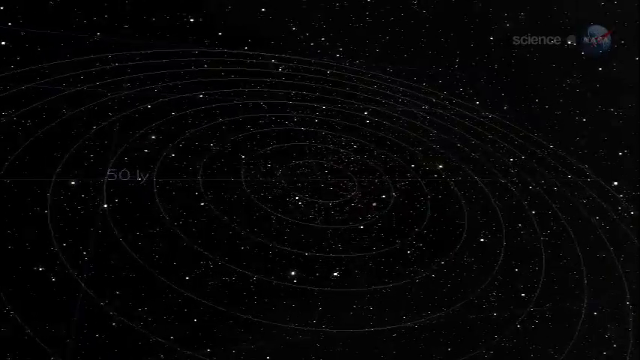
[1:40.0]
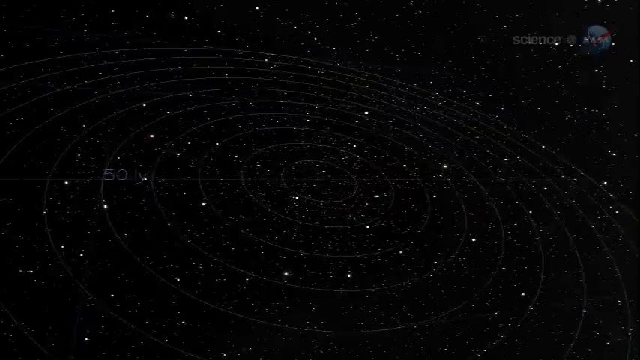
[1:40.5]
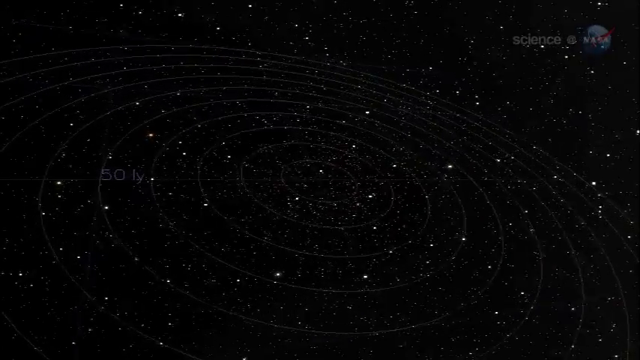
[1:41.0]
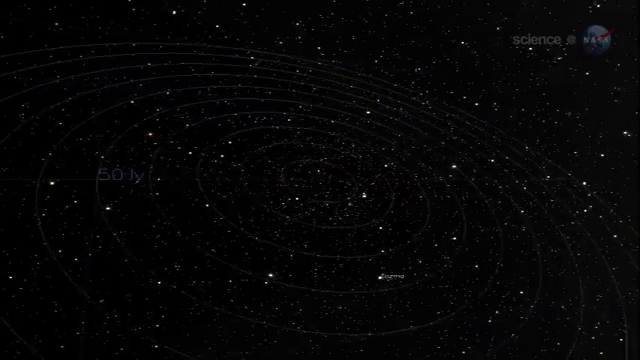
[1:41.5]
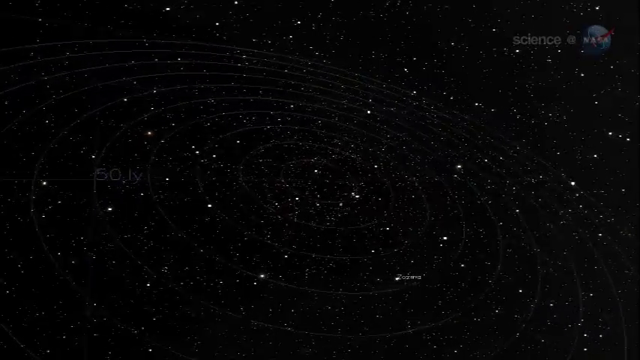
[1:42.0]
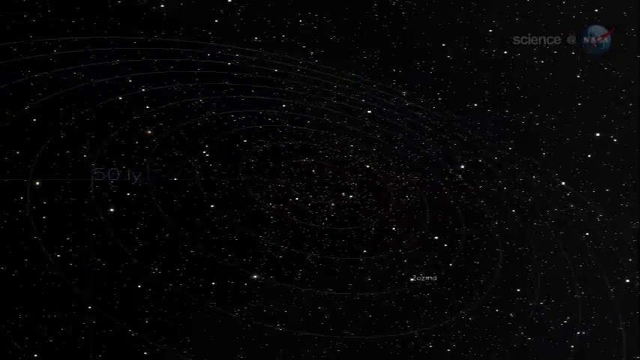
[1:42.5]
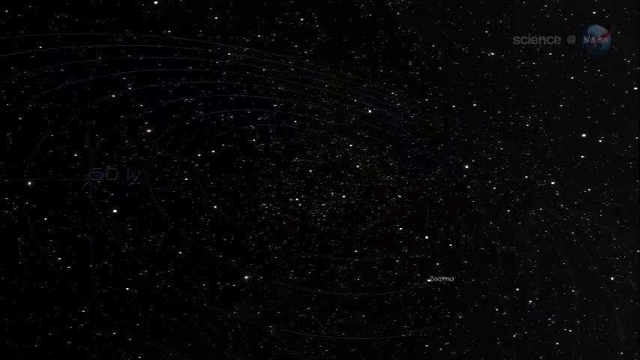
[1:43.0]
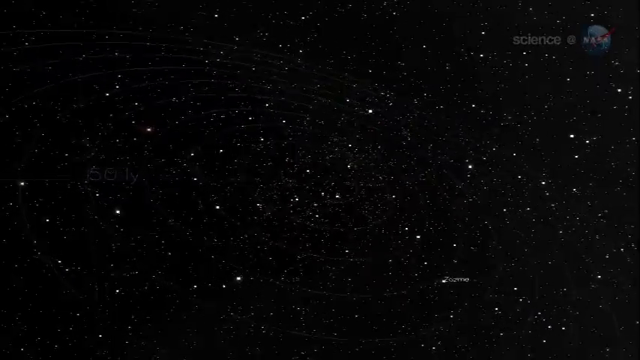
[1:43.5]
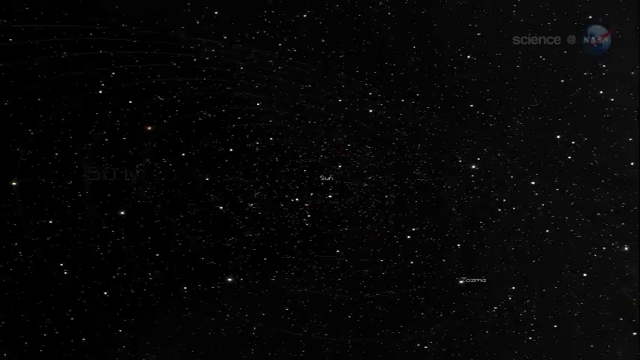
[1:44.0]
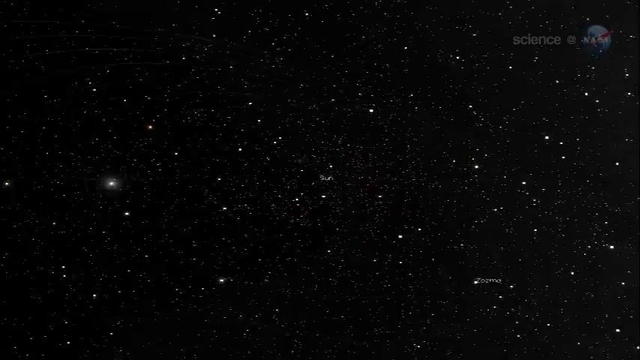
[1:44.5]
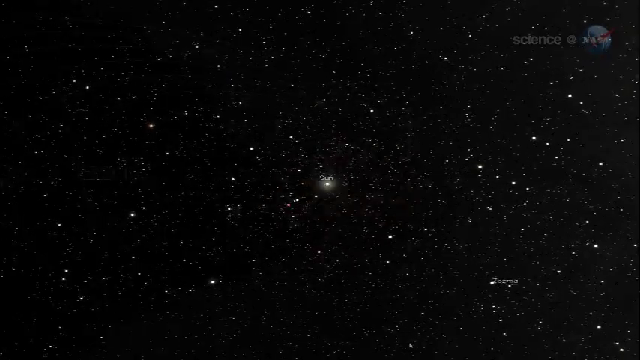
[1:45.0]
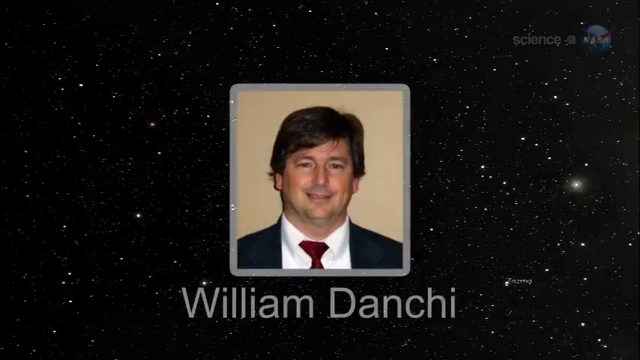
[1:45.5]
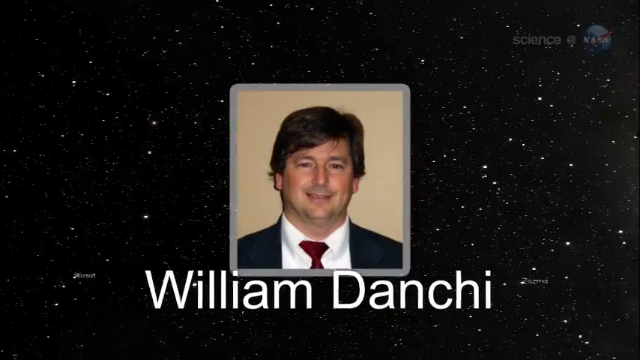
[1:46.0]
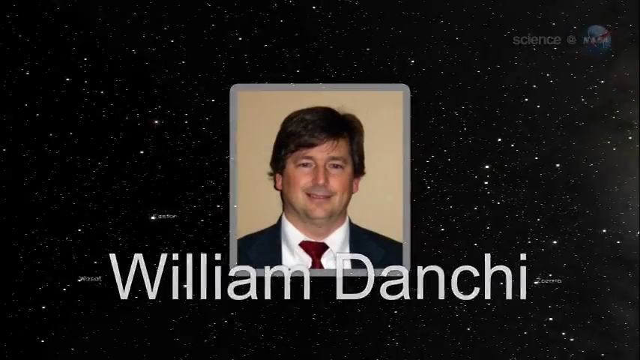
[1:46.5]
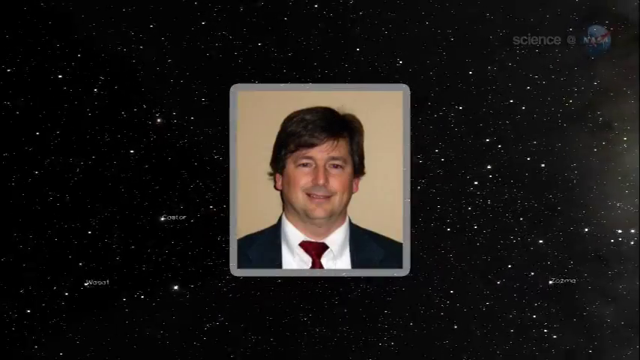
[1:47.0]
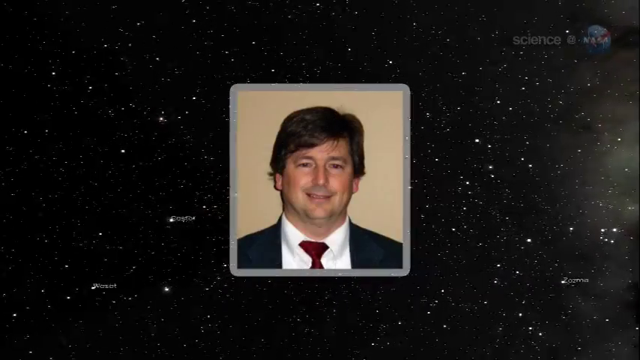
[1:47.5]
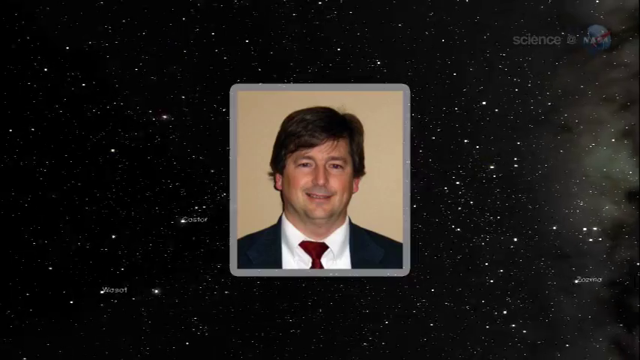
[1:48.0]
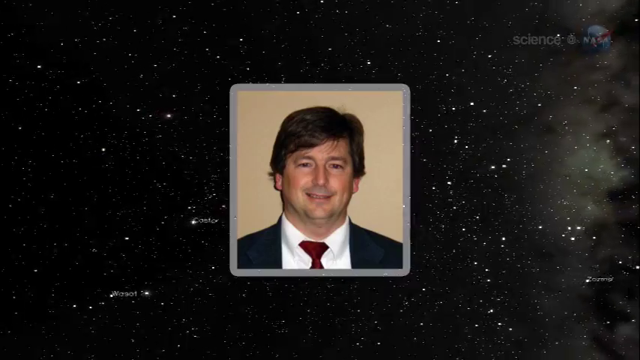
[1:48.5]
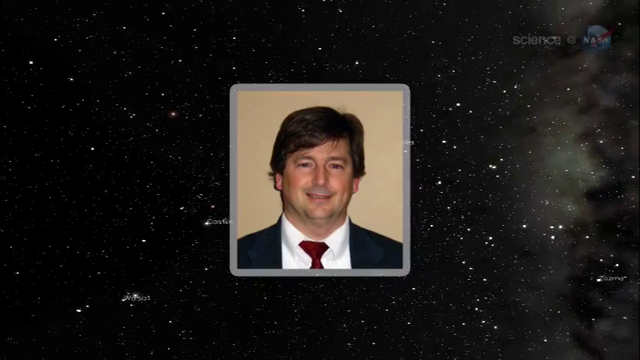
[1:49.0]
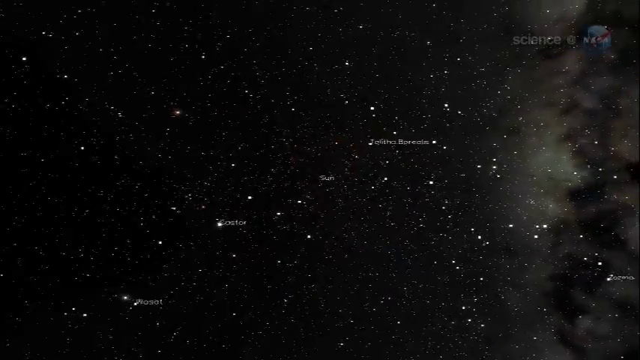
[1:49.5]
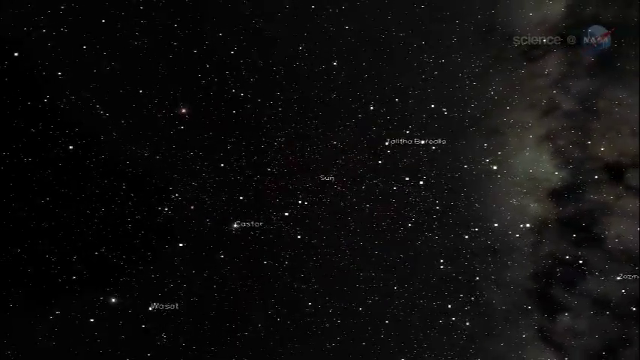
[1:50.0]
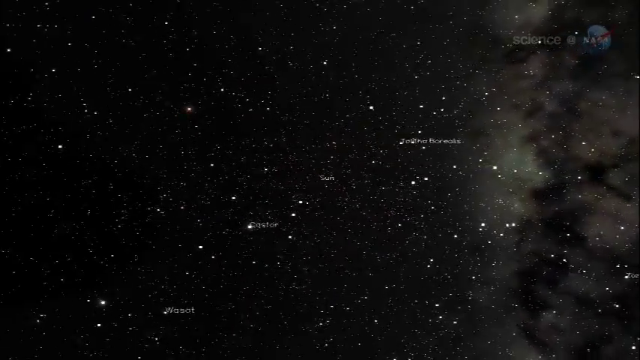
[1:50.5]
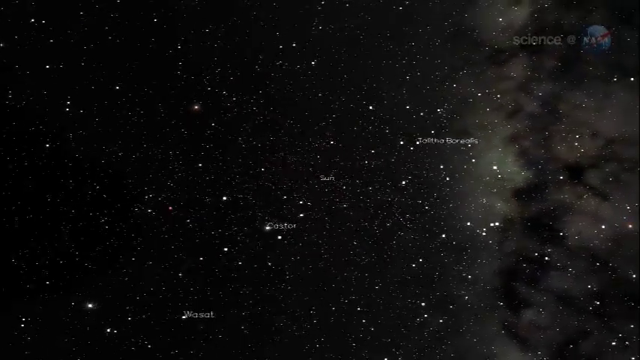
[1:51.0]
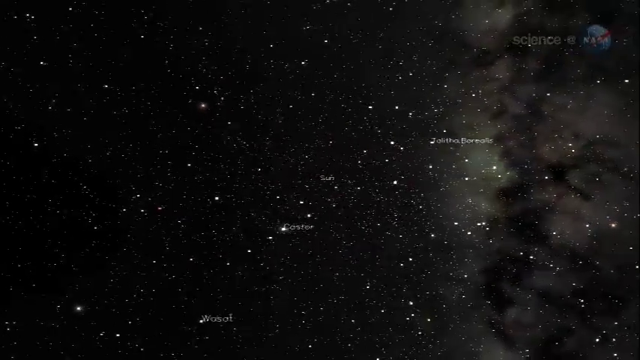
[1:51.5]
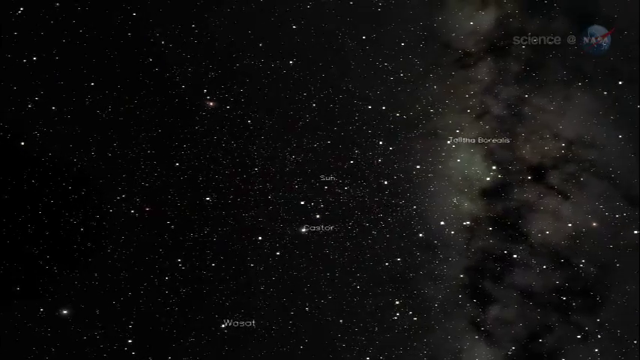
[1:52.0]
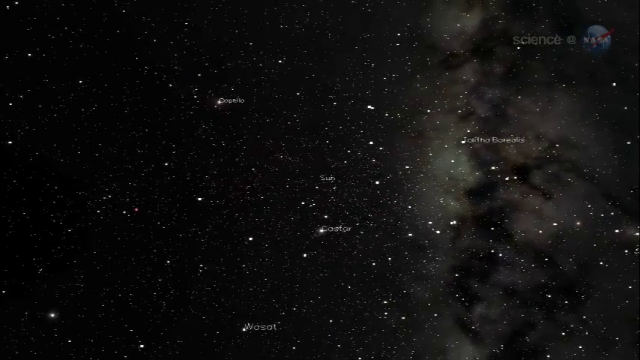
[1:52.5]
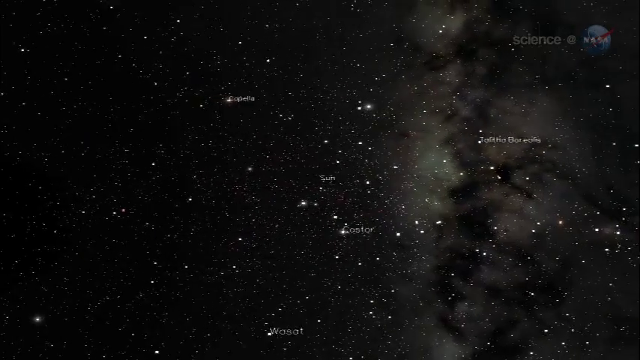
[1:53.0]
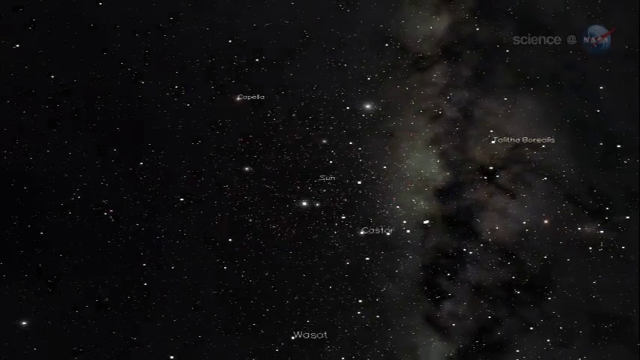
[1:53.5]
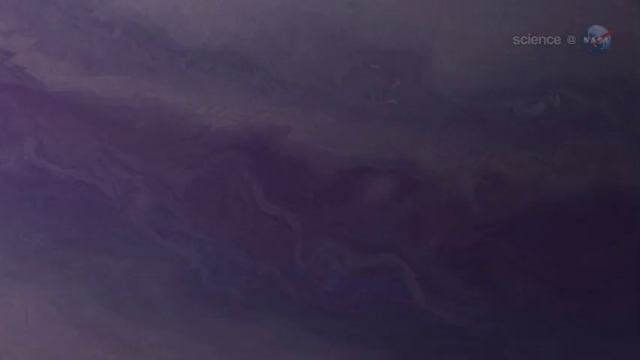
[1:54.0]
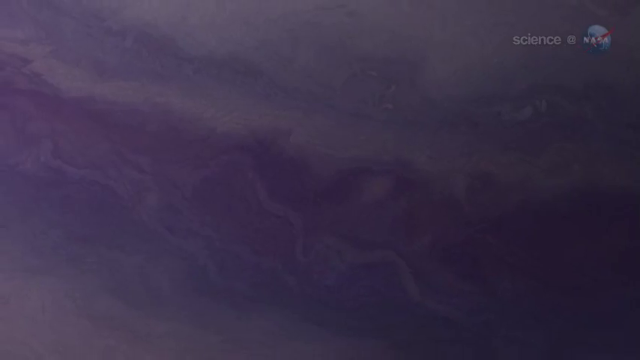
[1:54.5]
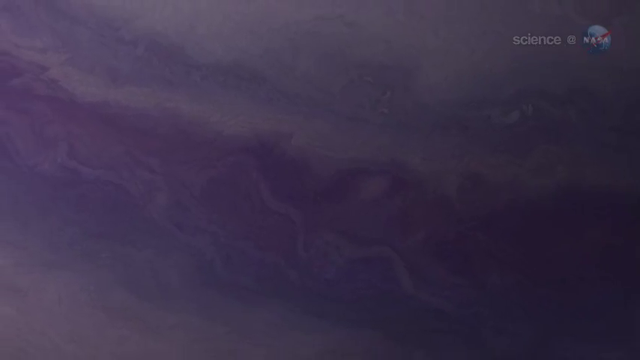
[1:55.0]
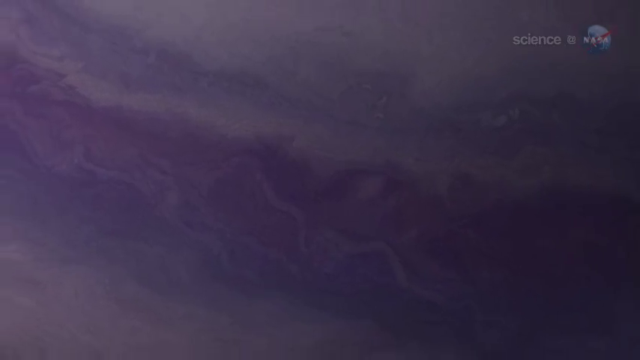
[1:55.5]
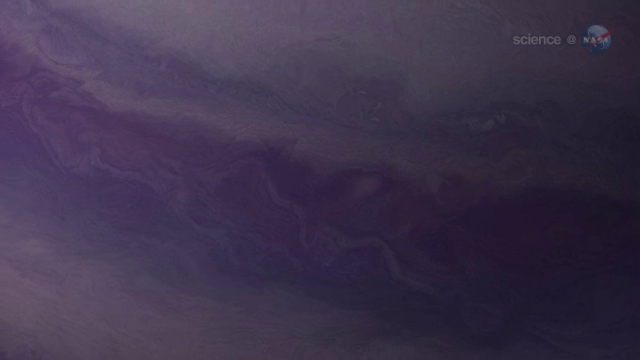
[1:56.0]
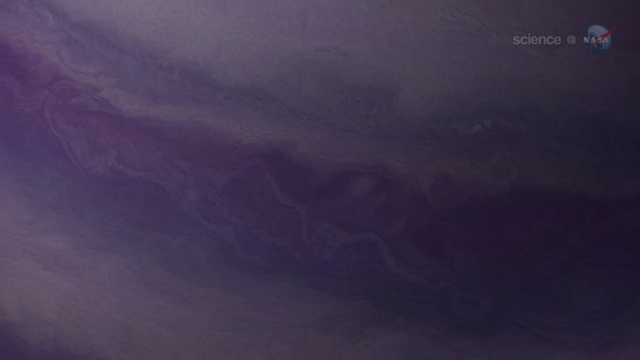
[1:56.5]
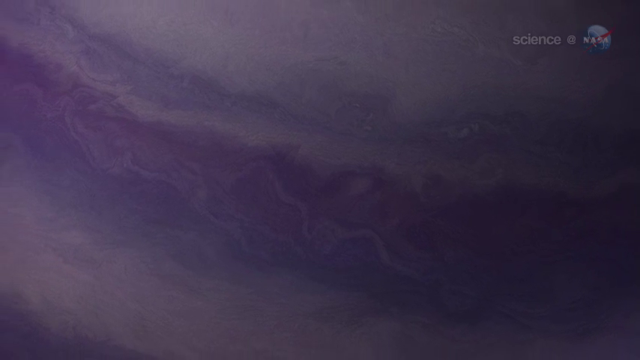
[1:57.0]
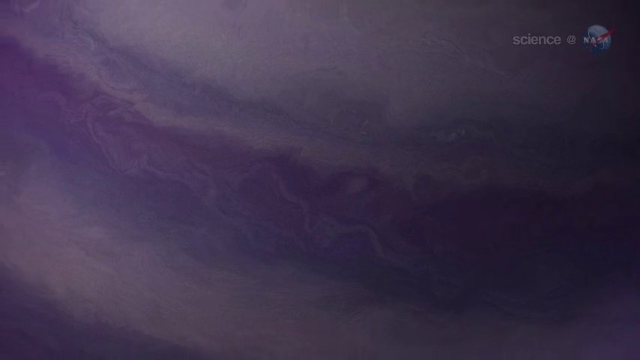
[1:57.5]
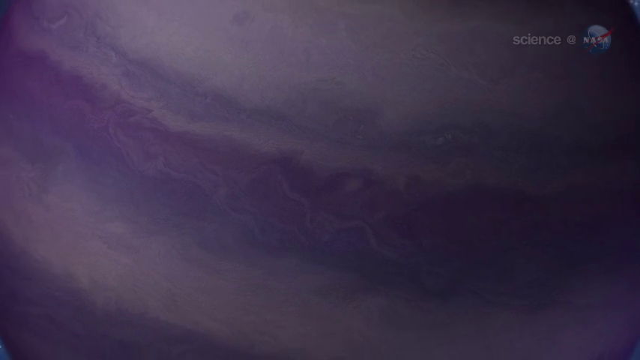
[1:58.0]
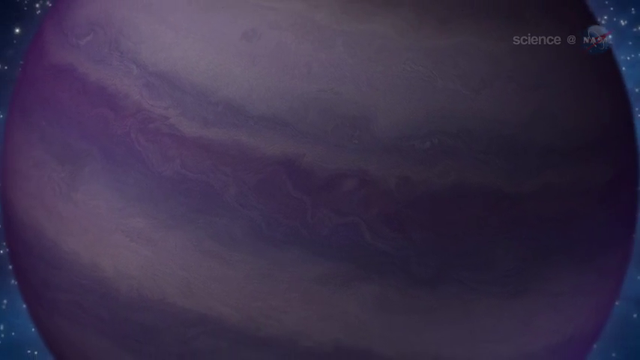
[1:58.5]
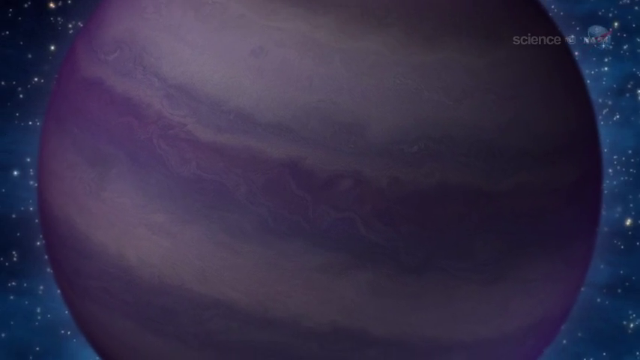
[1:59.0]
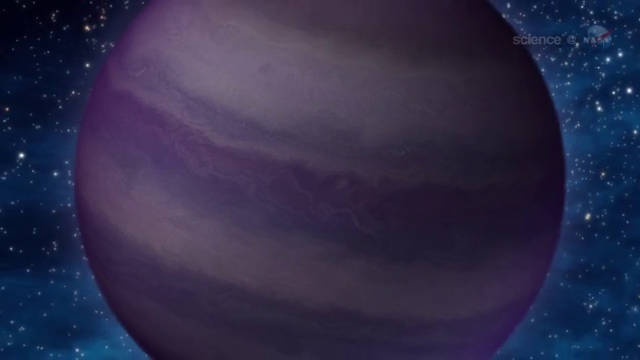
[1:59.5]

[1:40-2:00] The galaxy of stars continues among layered circles, each larger than the other, rotating with the stars showing different names among them. A picture of a man appears: he wears a black suit, a white dress shirt and a red tie, has long brown hair, and smiles at the camera, with "William Danchy" in white text. It disappears, and in the background the stars are still rotating with their names as a gassy structure comes up next to them. The video cuts to the outer layer of a planet whose color looks like a milky milk chocolate; the camera seems focused on the planet's outer layer. The planet is not labeled with a name, and around it appear to be blue stars and a blue sky.